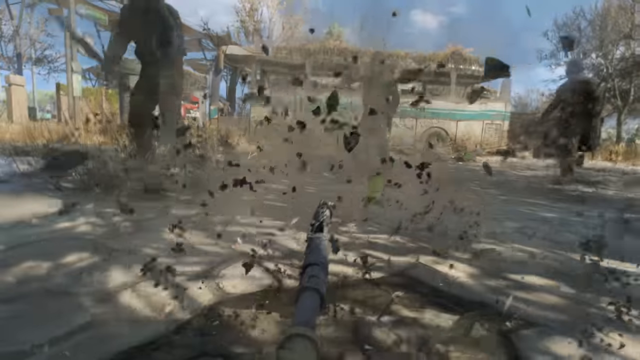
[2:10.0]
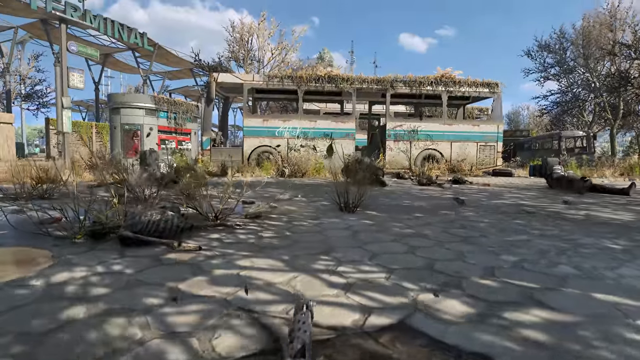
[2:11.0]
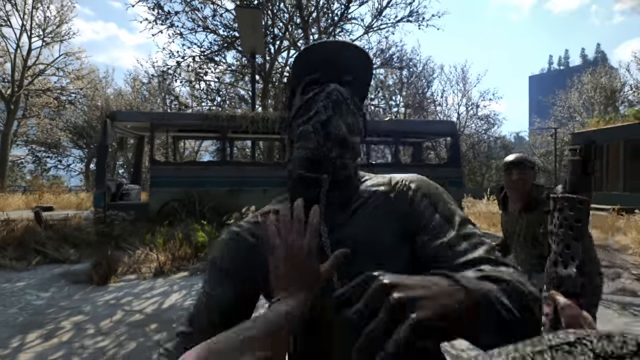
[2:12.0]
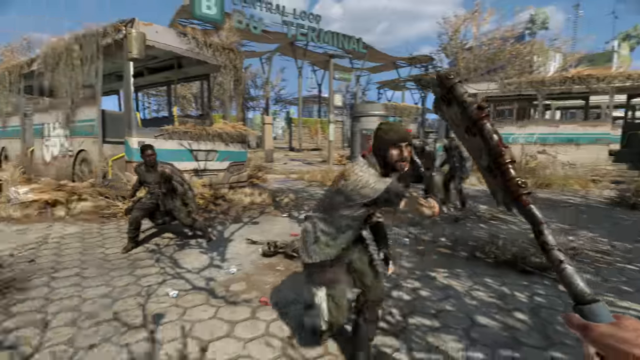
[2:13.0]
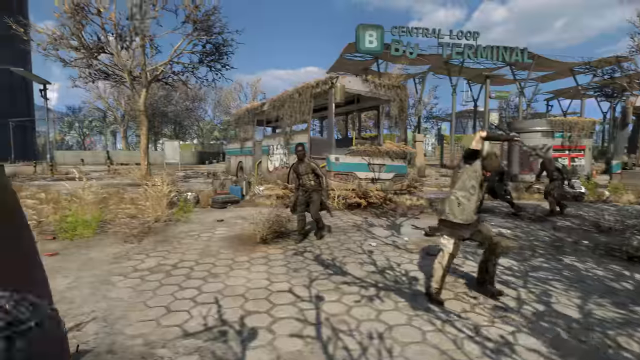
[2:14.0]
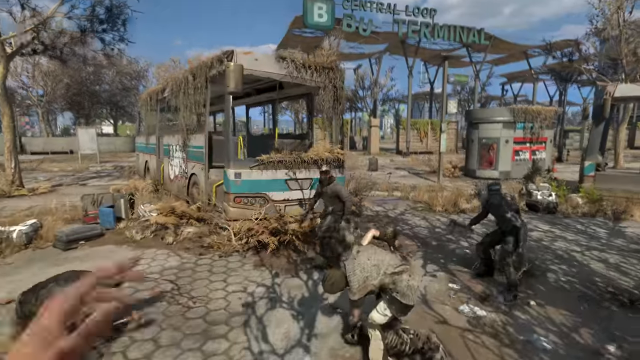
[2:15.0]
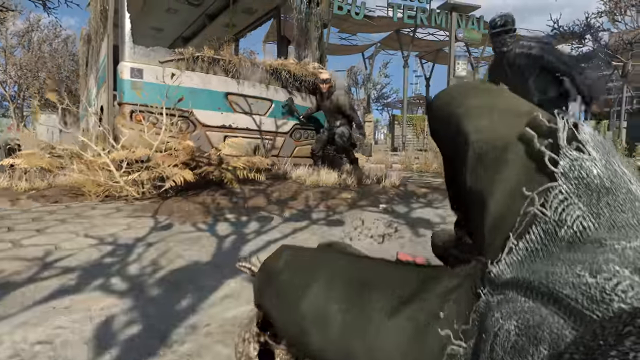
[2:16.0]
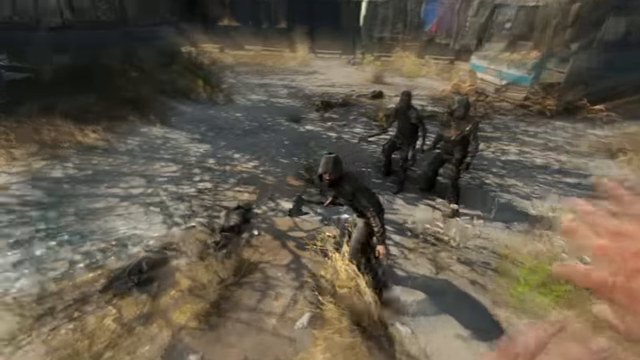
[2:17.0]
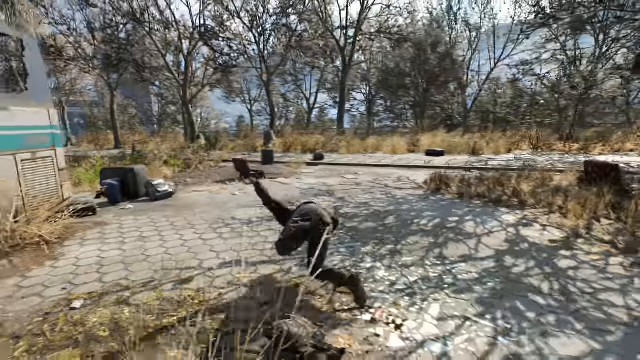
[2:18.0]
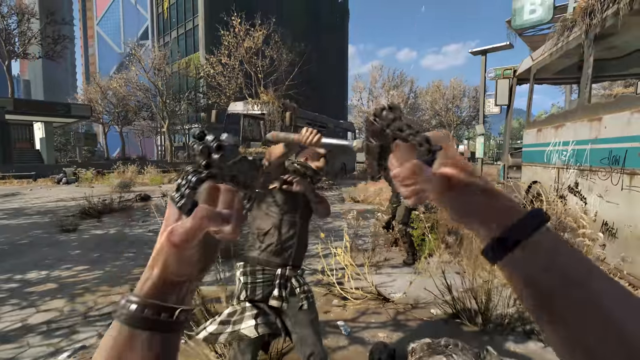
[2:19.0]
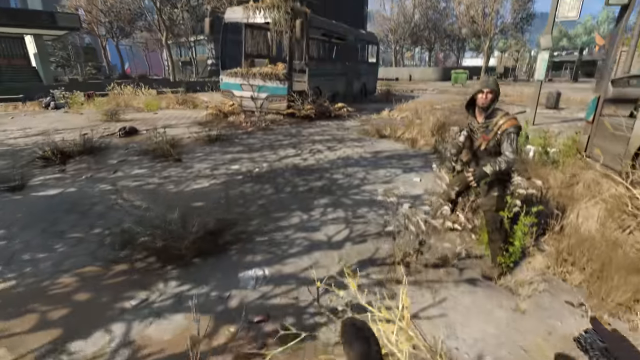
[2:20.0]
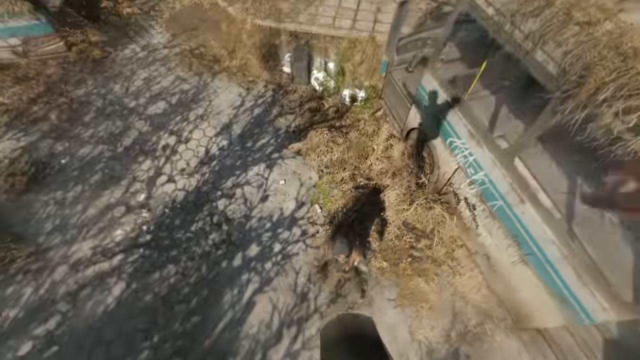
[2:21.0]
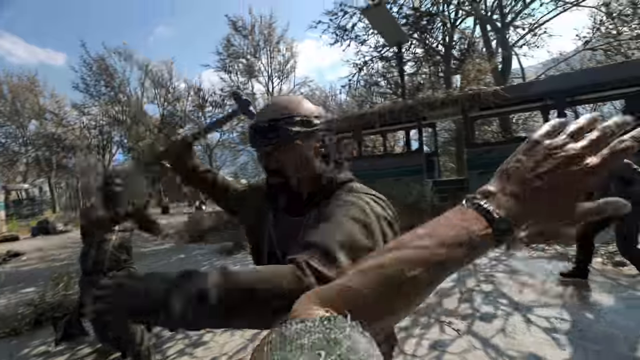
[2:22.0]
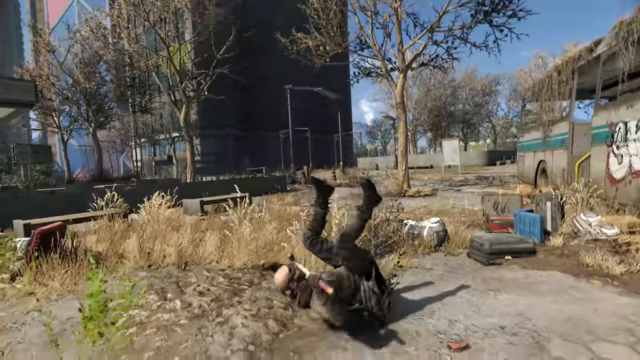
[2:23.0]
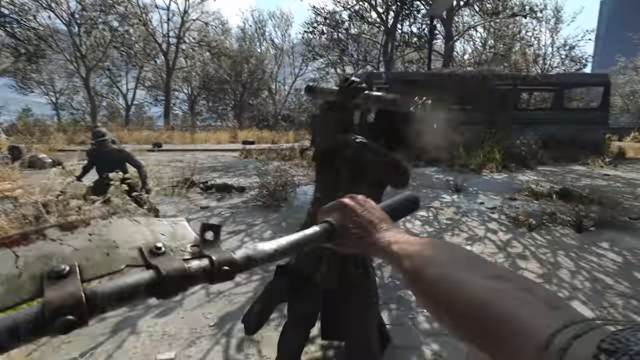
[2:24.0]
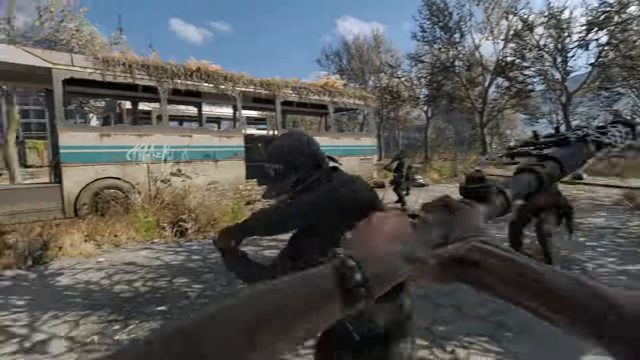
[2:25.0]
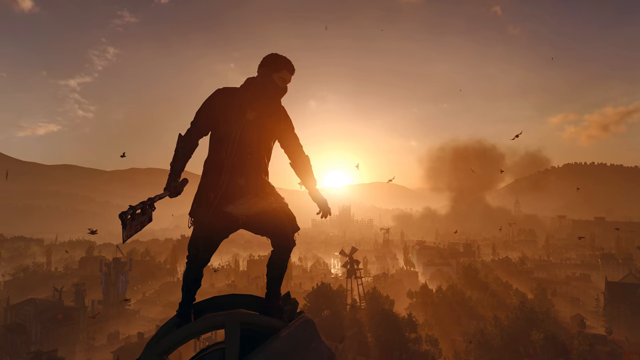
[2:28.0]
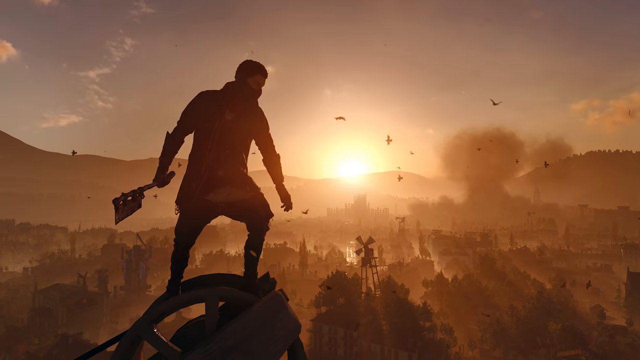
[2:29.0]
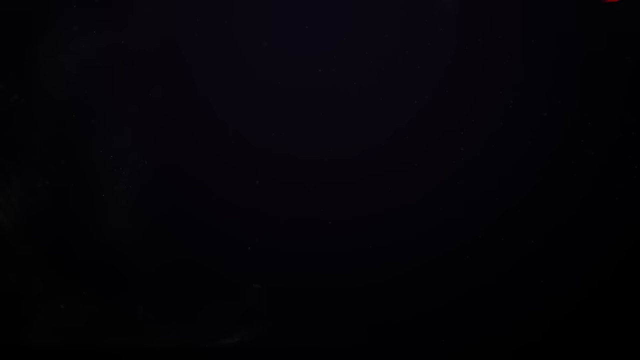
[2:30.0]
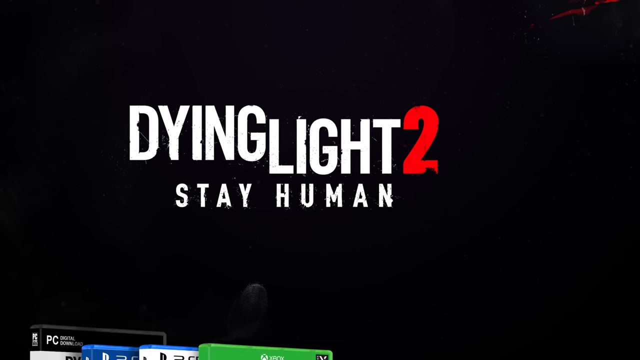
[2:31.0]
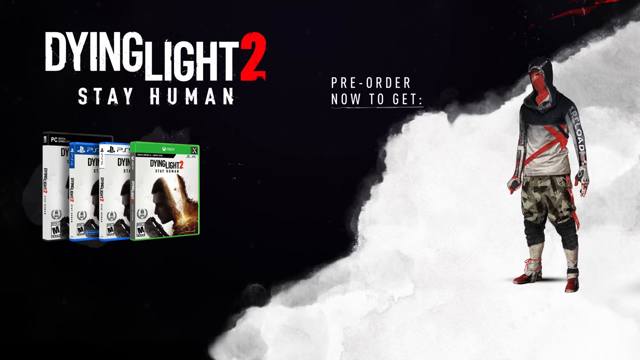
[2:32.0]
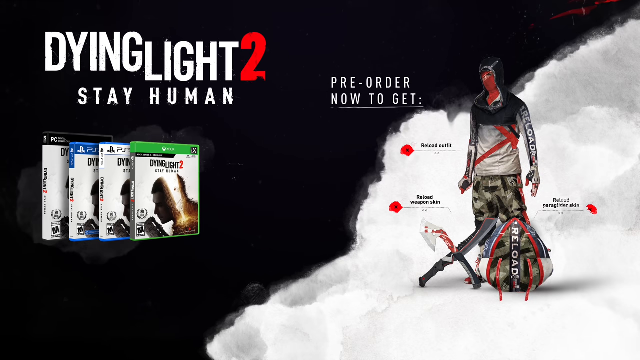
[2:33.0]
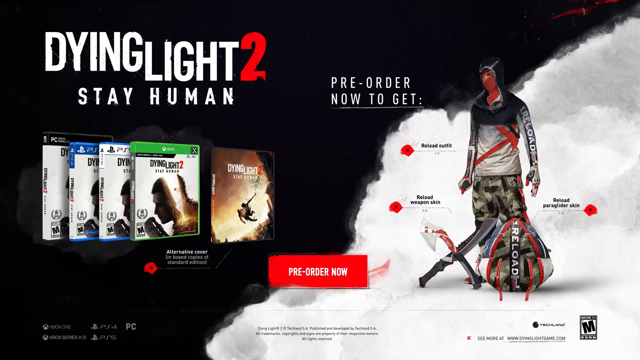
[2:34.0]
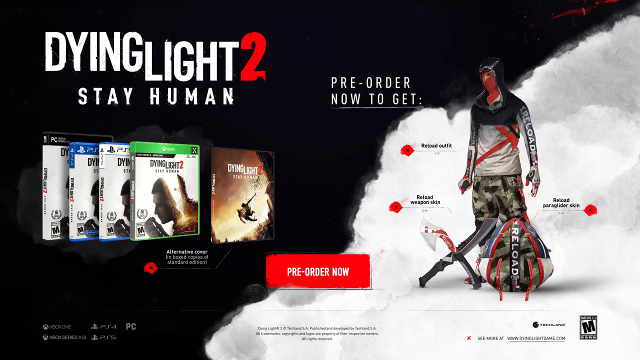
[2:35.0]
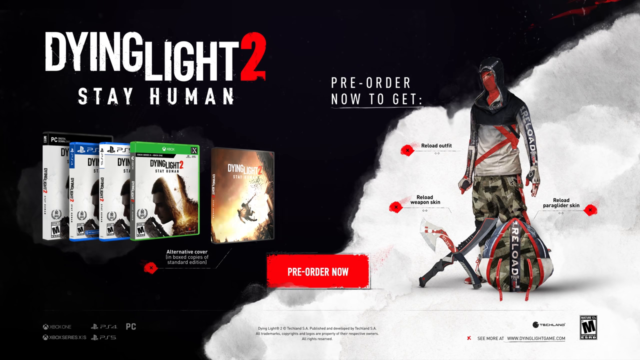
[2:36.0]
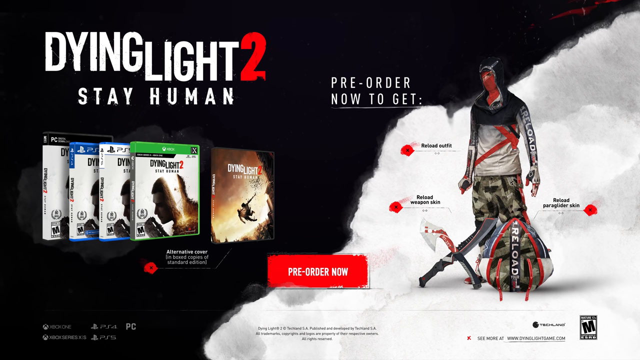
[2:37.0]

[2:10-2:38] People are fighting, more regular people than zombies. Part of the fighting takes place at what used to be a bus terminal, now full of burned-out, abandoned buses, with people walking around carrying clubs, metal clubs with spikes, hammers and other items. One man appears to be on his own, fighting everybody. Towards the end, text appears in the upper left corner in white capital letters: "DYING LIGHT," followed by a red "2." Underneath, in smaller white bold capital letters, it says "STAY HUMAN." On the right side, with some space in between, it says "pre-order" with "now" underneath, followed by the games listed. A person, apparently standing, wears a red scarf over his face and a book bag, with the text "pre-order now."